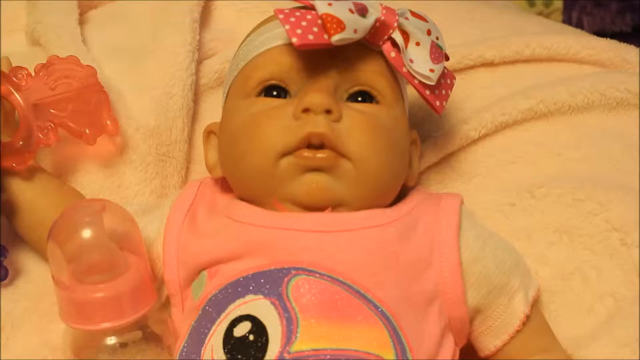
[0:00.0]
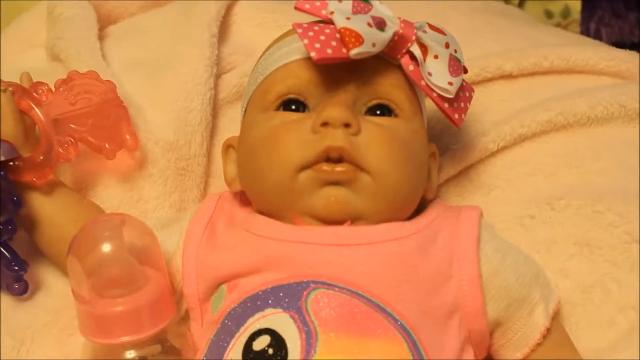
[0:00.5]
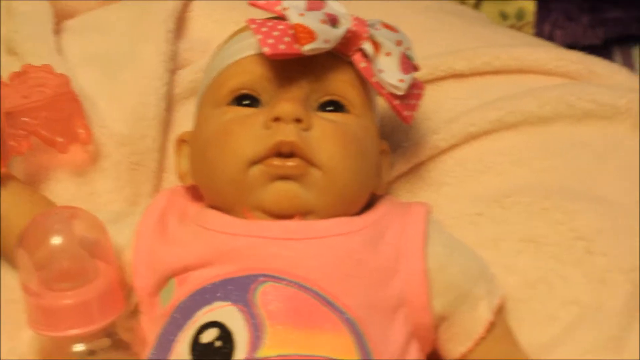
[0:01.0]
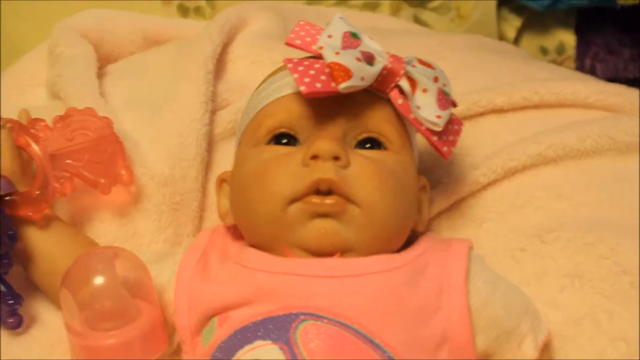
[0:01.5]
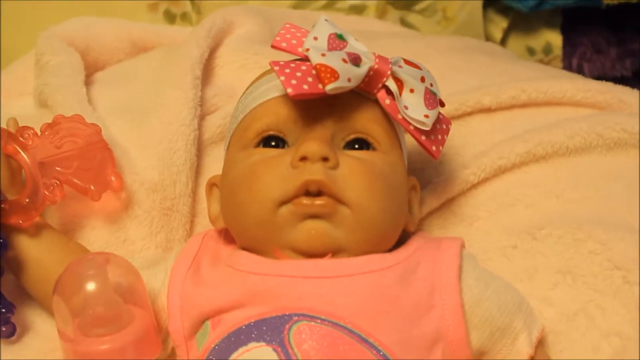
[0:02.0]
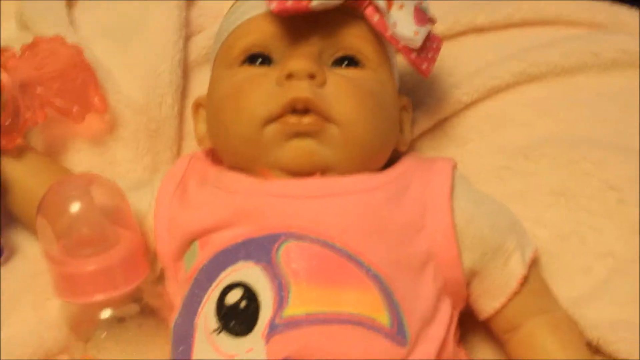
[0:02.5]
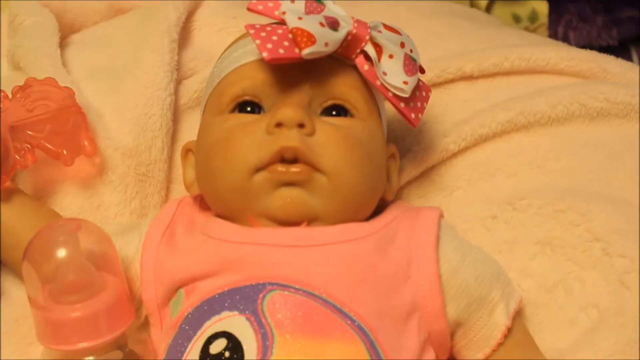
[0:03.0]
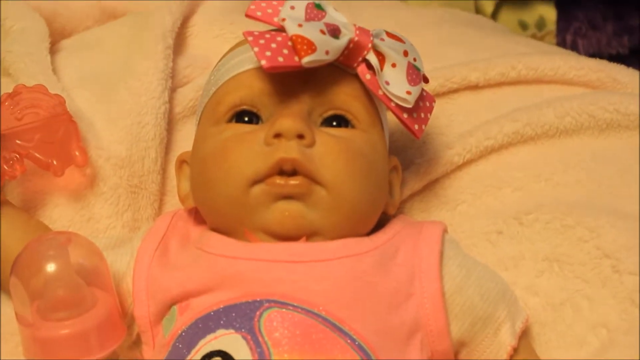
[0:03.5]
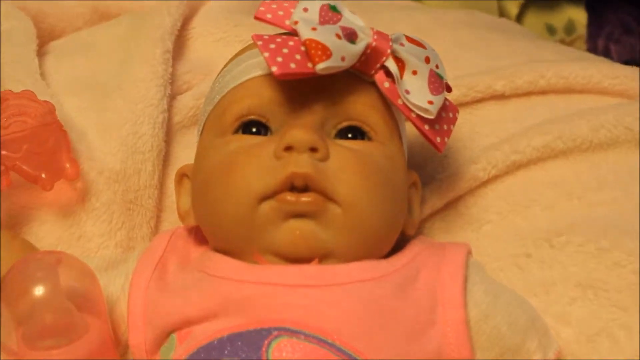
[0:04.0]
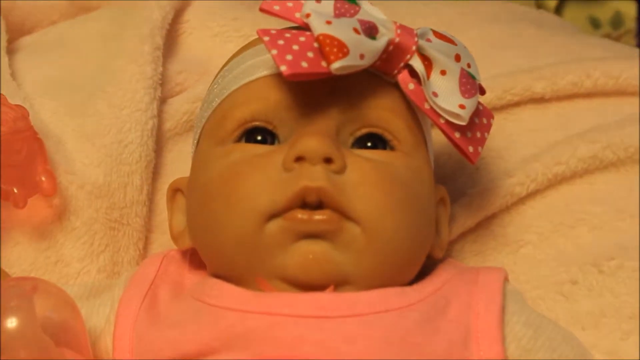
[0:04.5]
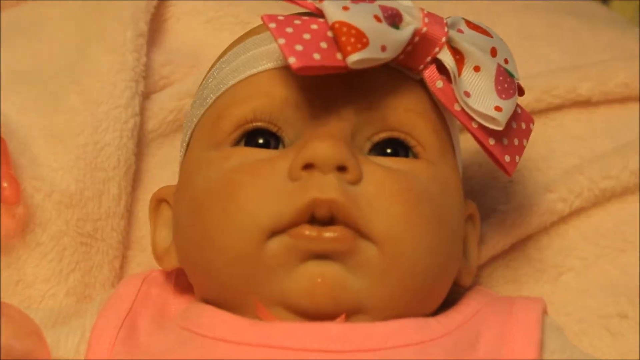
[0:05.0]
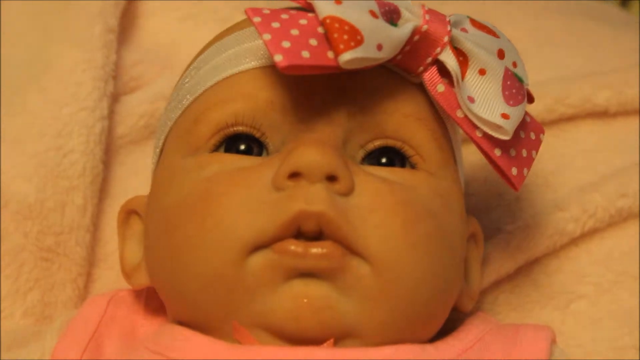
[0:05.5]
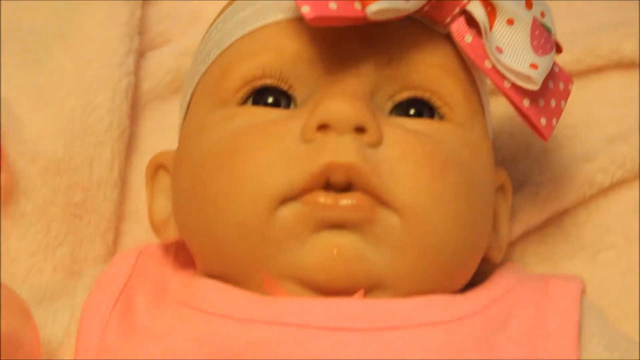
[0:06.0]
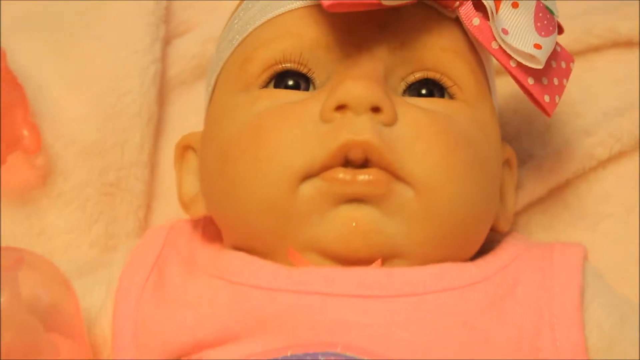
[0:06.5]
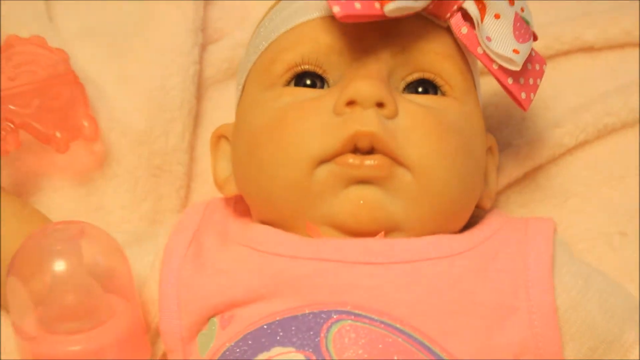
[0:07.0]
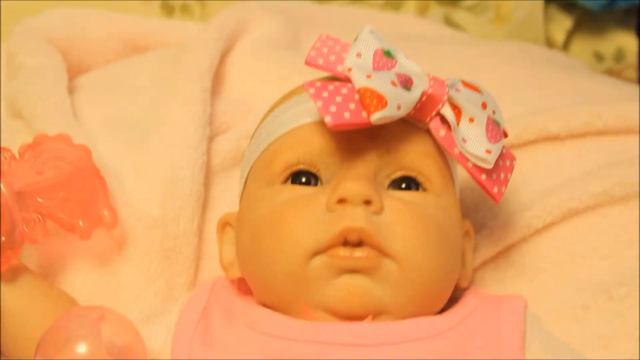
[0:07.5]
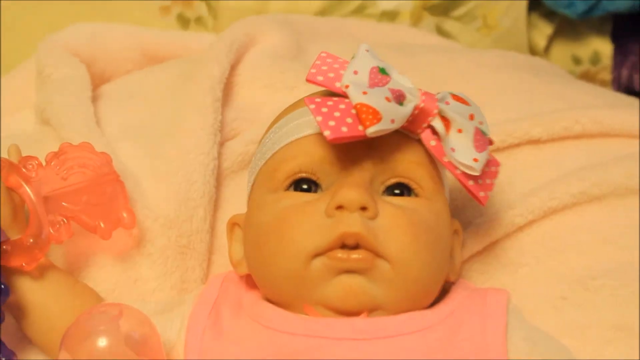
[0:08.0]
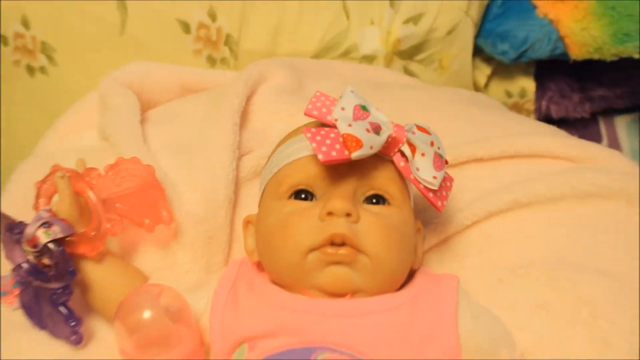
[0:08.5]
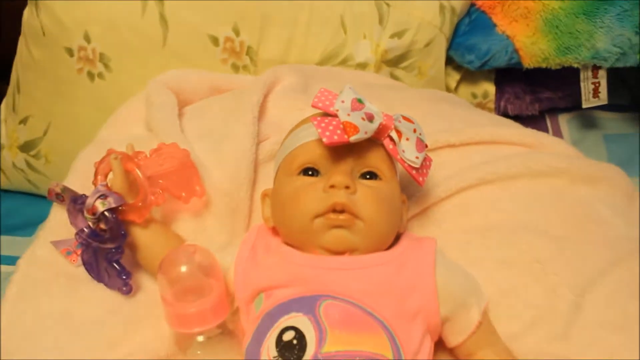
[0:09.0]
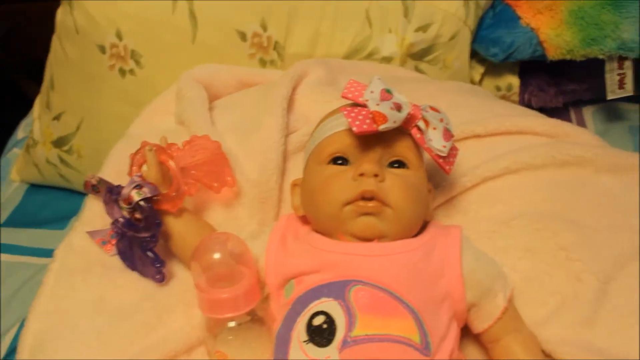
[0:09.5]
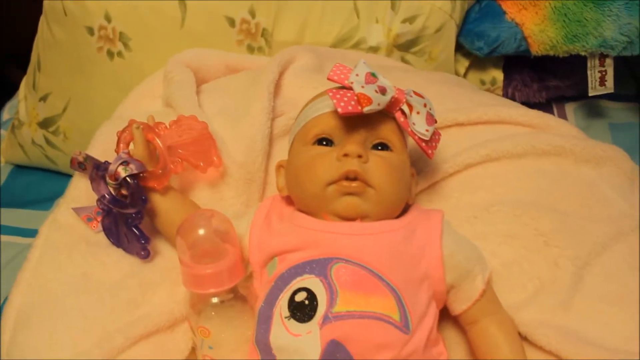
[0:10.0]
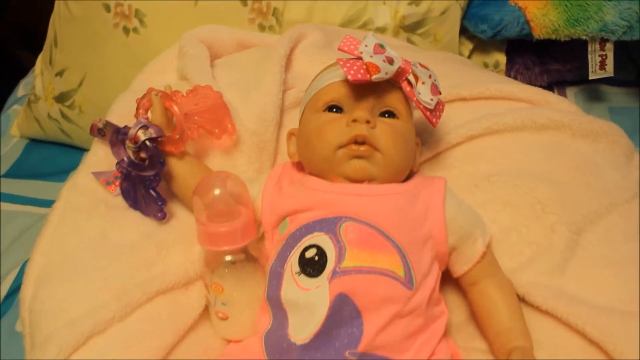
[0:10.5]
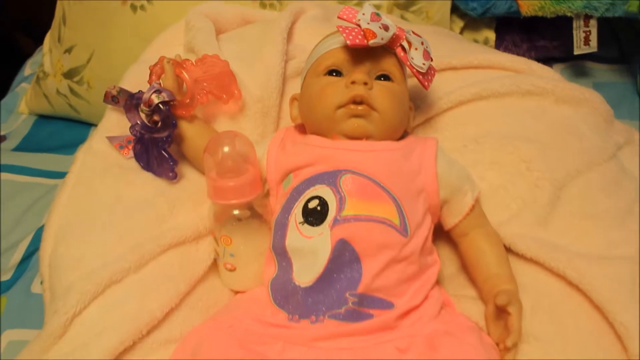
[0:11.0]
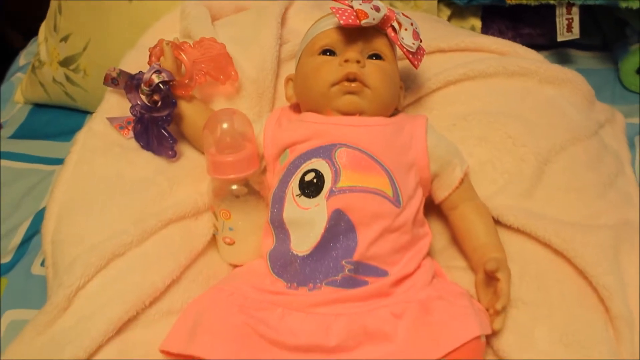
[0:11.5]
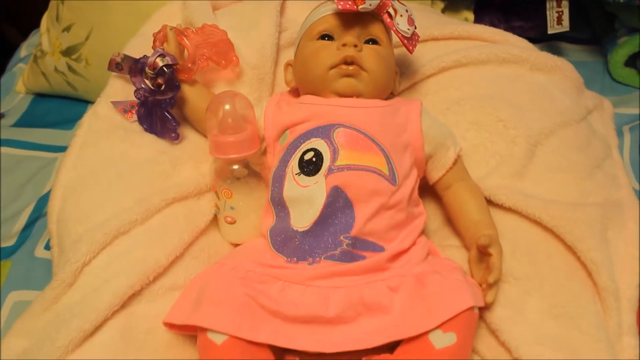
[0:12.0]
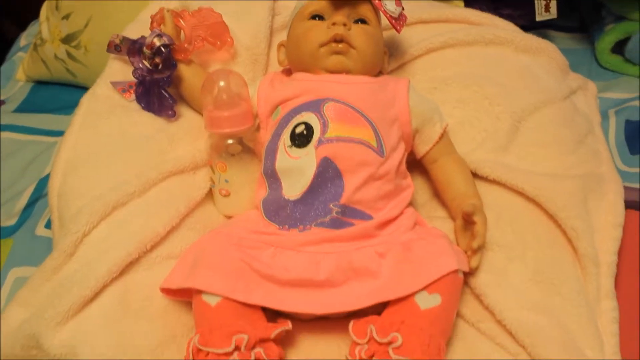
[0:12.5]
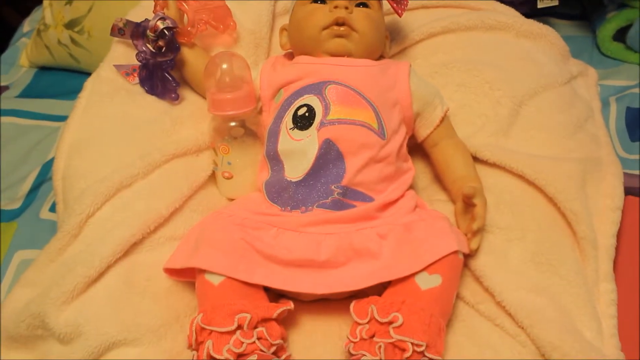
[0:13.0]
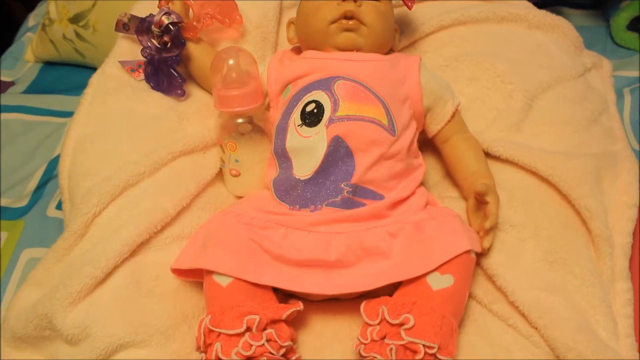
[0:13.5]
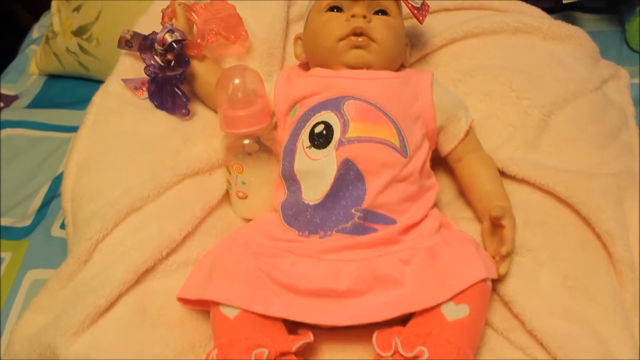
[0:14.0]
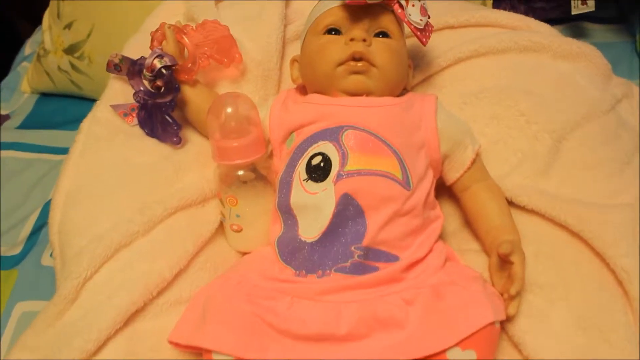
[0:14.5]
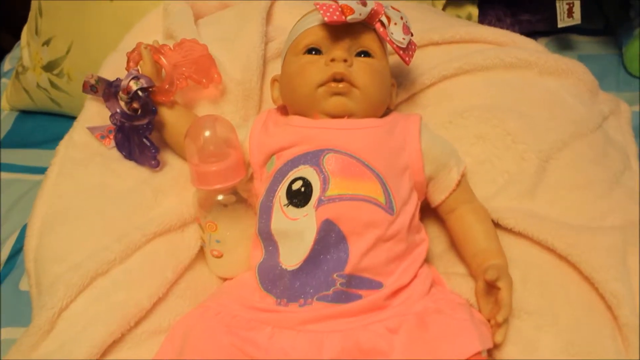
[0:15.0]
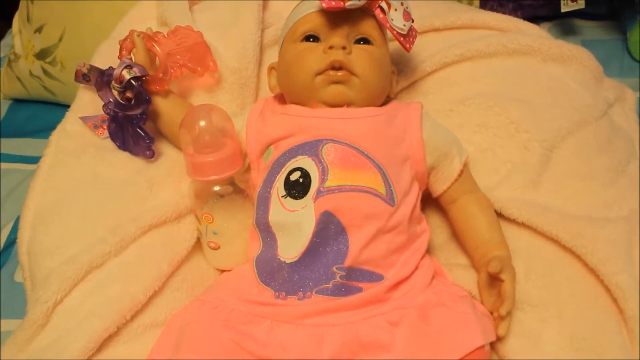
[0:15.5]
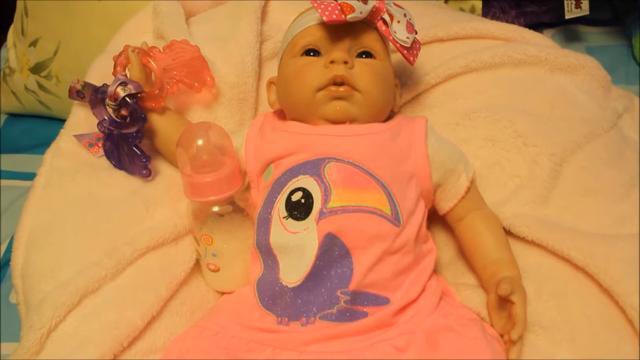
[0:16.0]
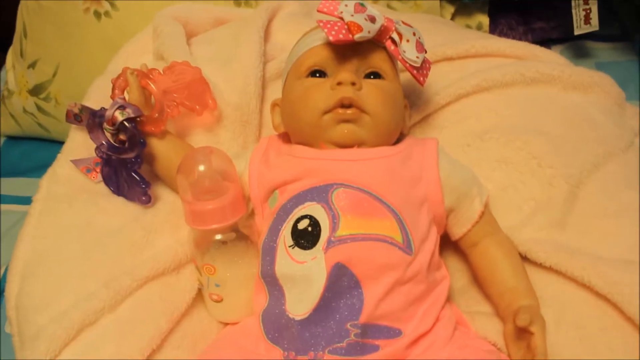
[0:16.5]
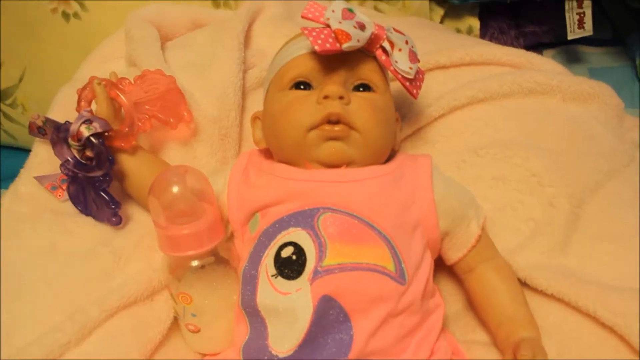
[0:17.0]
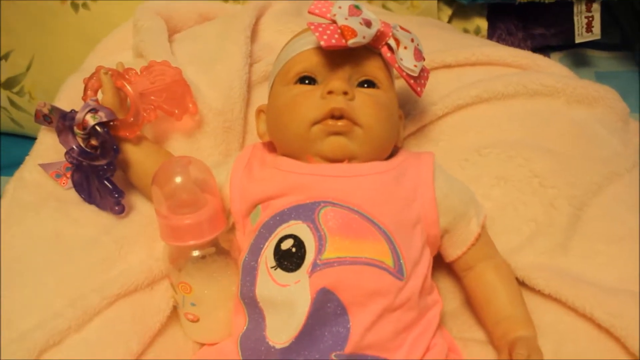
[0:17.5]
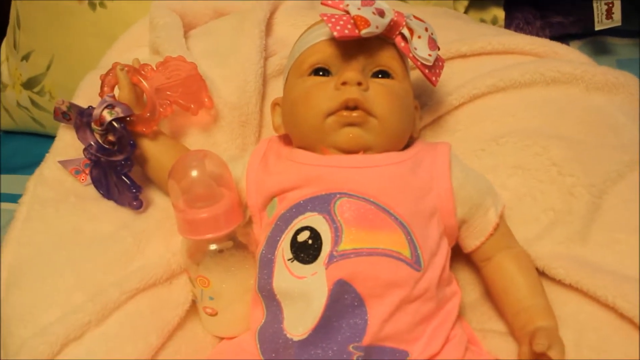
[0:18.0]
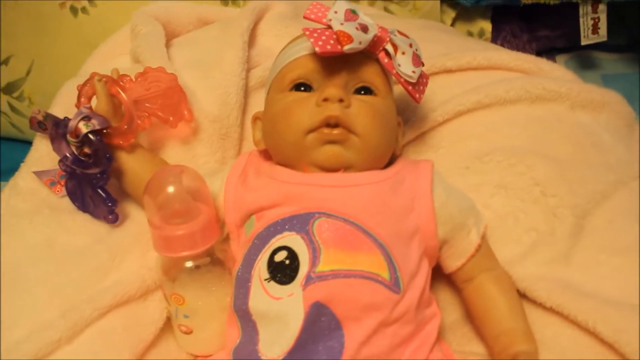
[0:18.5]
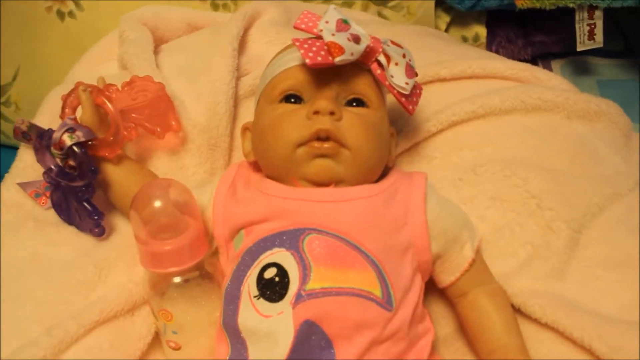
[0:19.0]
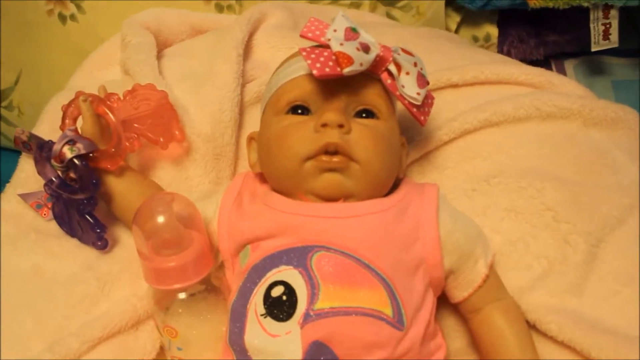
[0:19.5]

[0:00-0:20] A baby doll wears a pink bow on its head, a white headband, a pink skirt and a pink boot, and has little plastic things on its arm. The camera zooms in on the doll's face and zooms out, then shows a widened view of the doll. A bottle of milk is to the side of it. The doll is lying on a blanket on what looks to be a bed, with a pillow and some green and orange furry material in the background. The doll has two eyes, a nose, a mouth and two ears.